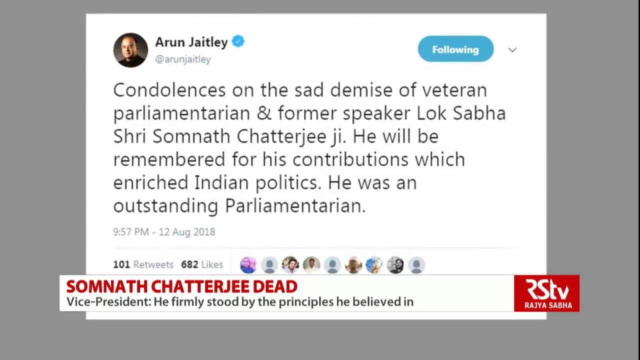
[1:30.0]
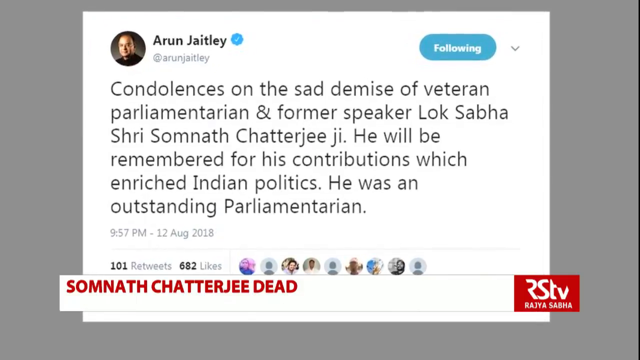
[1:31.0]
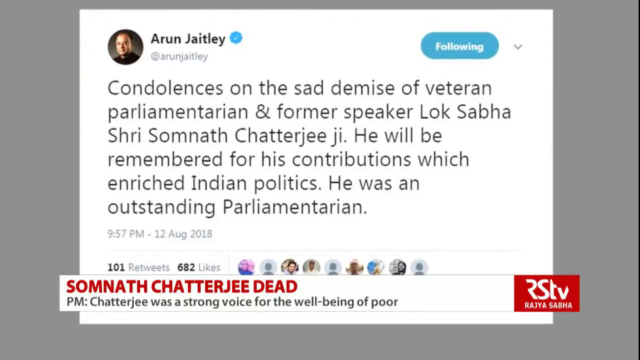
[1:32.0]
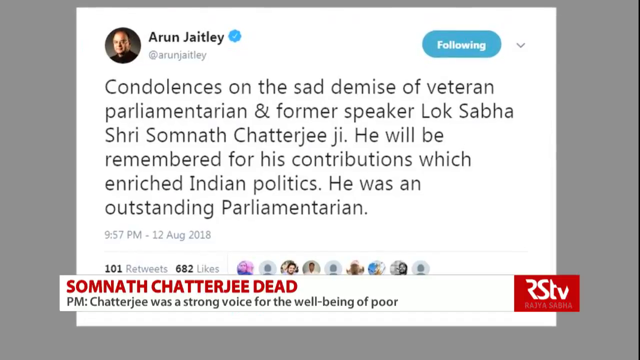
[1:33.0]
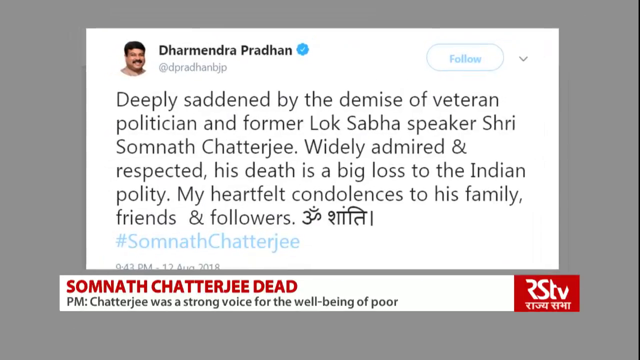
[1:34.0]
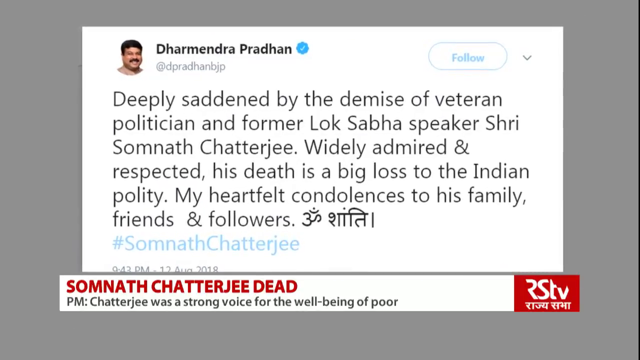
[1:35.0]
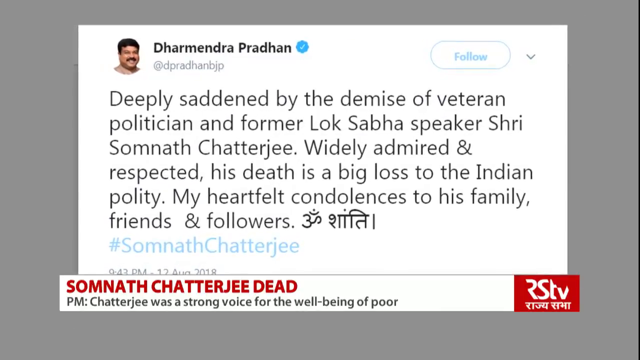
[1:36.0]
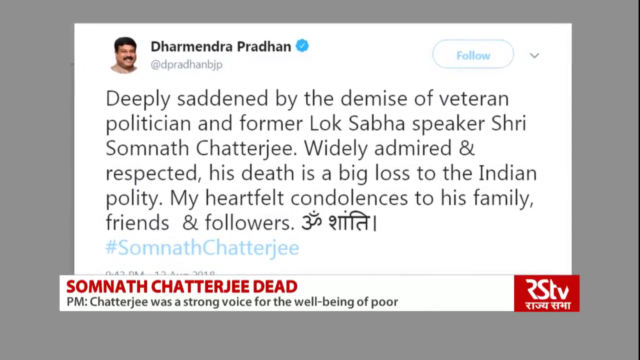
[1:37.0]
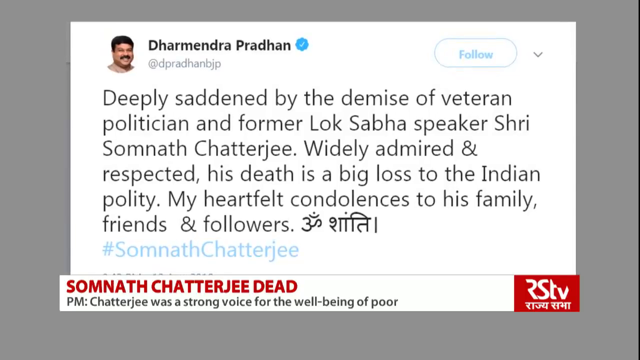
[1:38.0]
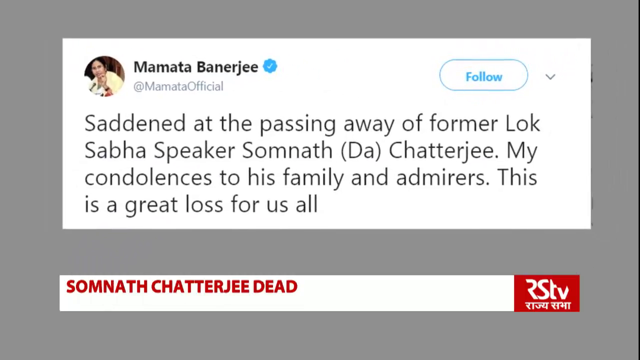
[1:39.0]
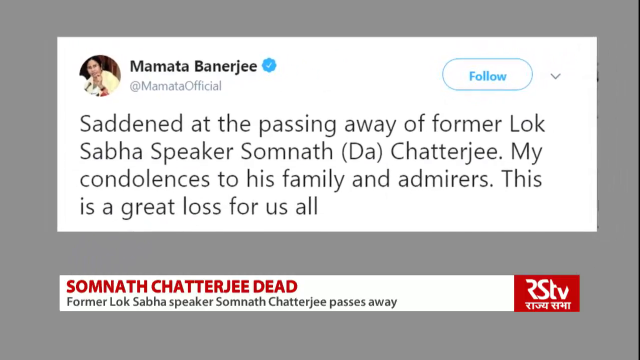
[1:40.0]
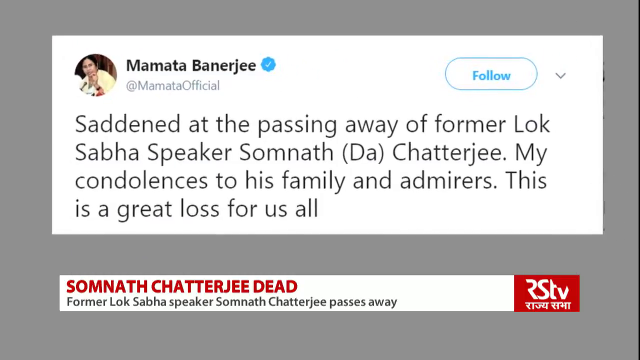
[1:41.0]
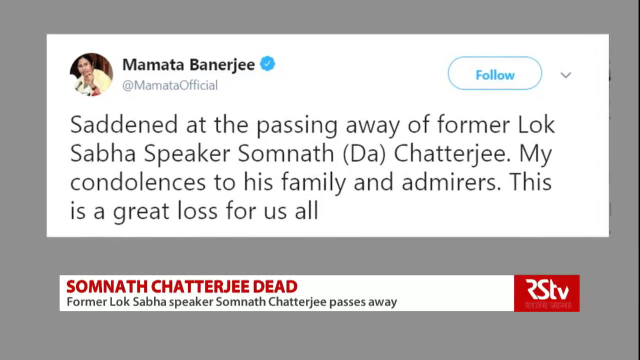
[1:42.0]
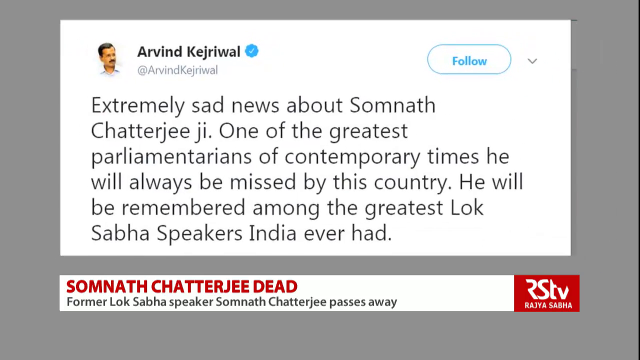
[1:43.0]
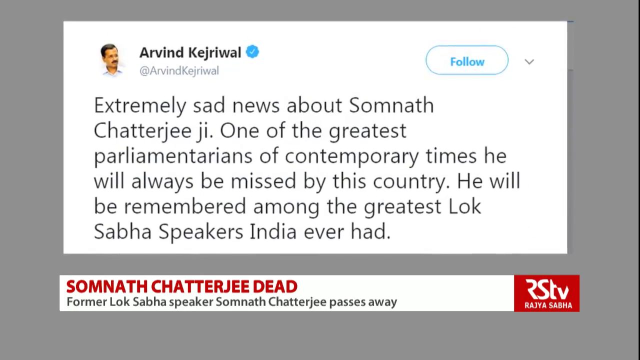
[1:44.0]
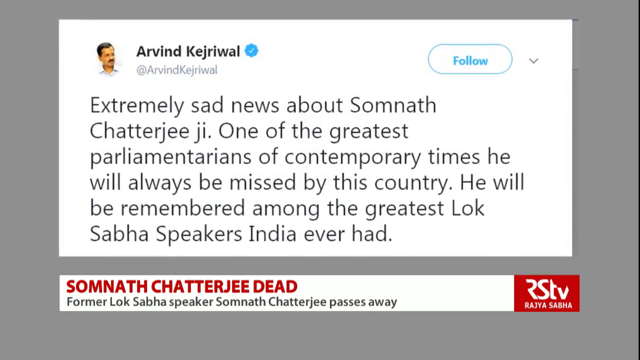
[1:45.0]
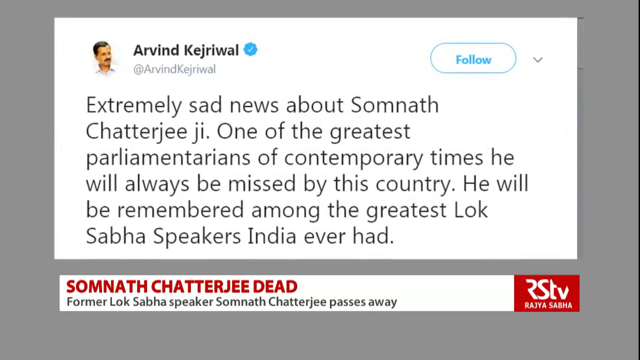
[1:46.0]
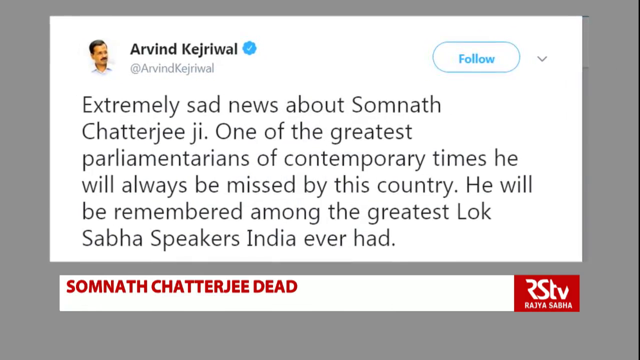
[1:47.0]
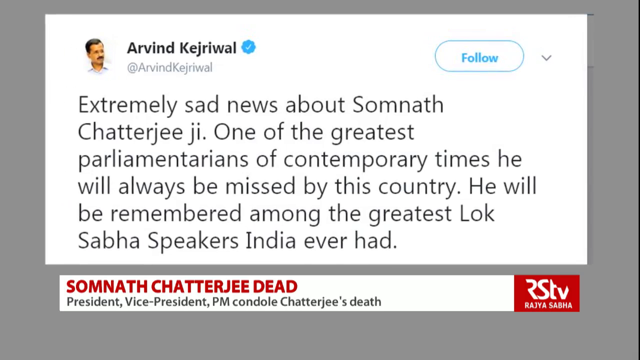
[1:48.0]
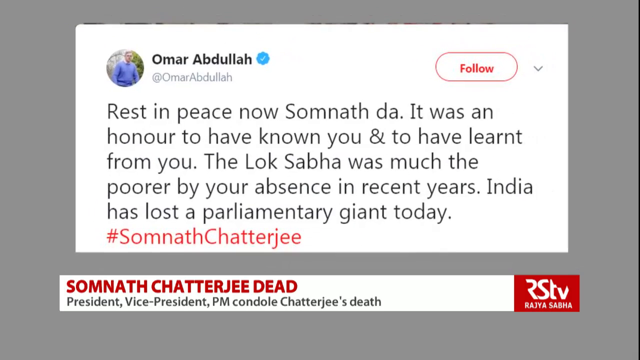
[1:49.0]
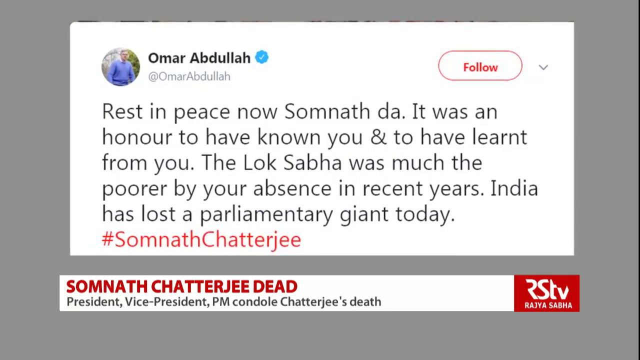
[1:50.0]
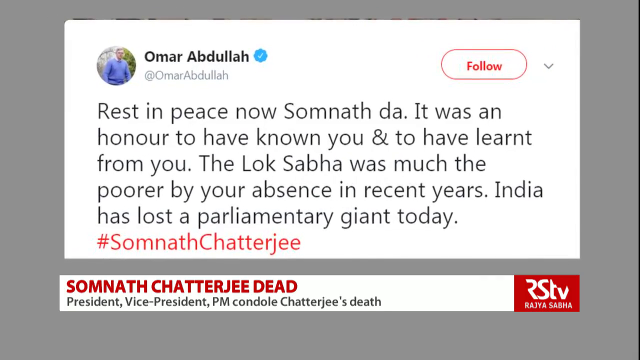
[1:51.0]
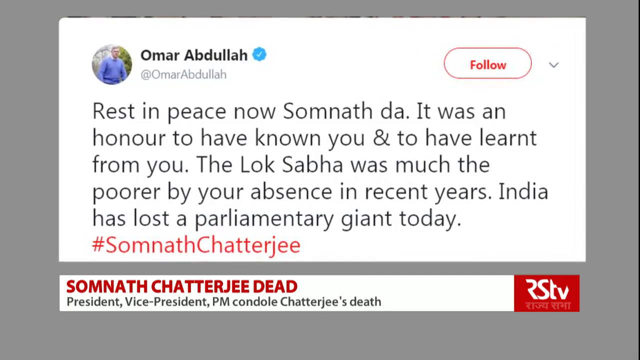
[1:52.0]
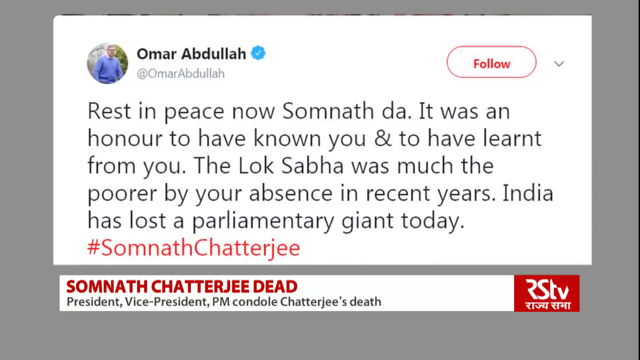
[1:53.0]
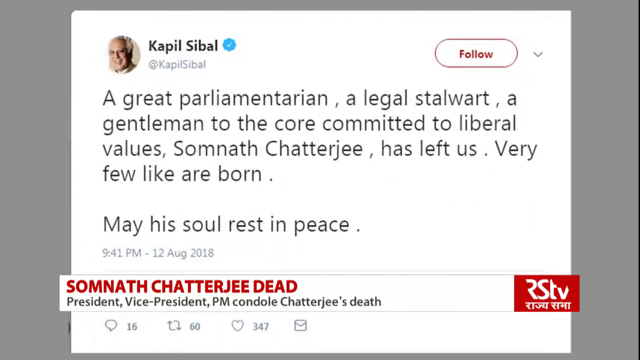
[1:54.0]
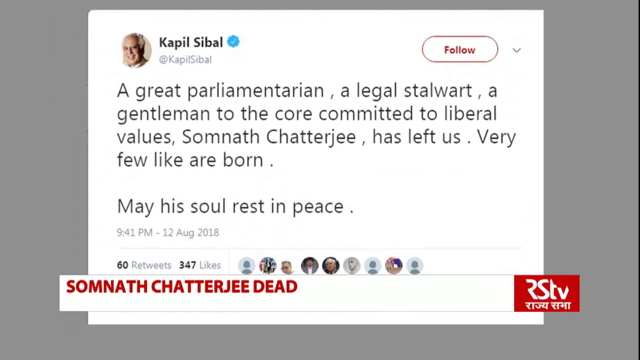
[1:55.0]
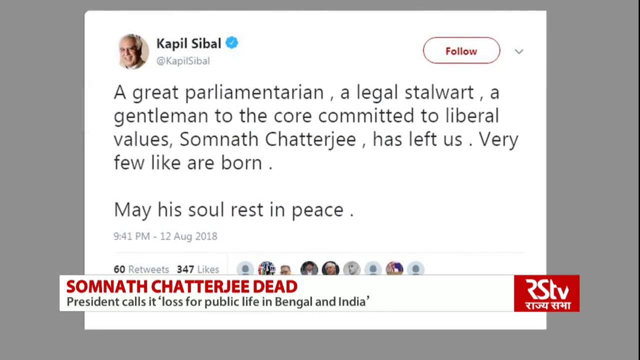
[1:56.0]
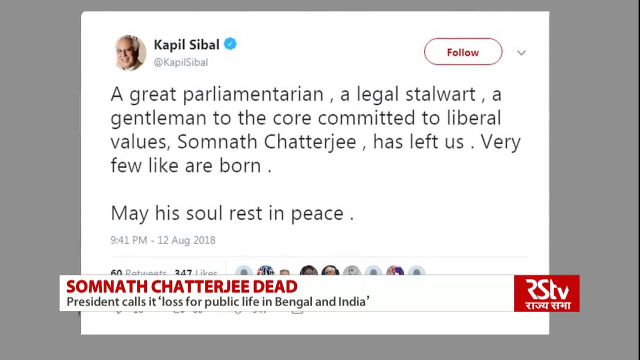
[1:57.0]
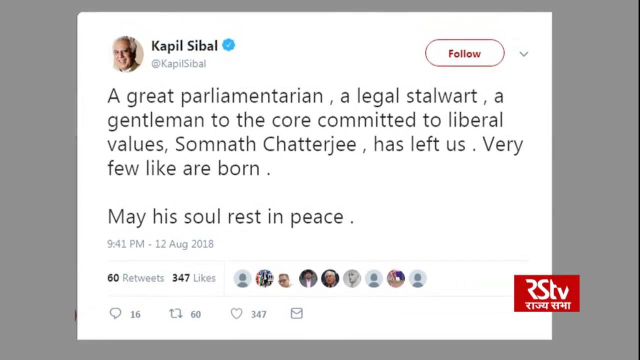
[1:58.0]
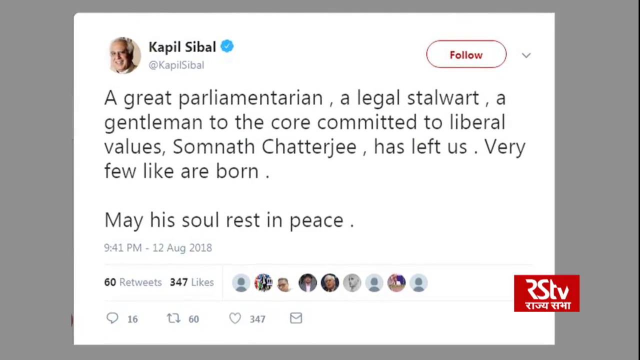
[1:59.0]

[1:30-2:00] A tweet by Arun Jaitley is in the center of the screen: "Condolences on the sad demise of veteran parliamentarian and former speaker Lok Sabha Shri Samnath Chatterjee. He will be remembered for his contributions which enriched Indian politics. He was an outstanding parliamentarian." It shows 101 retweets and 682 likes. The video cuts to a tweet by Dharmendra Paradhan: "deeply saddened by the demise of veteran politician and former Lok Sabha speaker Shri Samnath Chatterjee. Widely admired and respected his death is a big loss to the Indian politics. My heartfelt condolences to his family, friends, and followers." It then cuts to a tweet by Mamata Banerjee: "saddened at the passing away a former Lok Sabha speaker Samnath Das Chatterjee. My condolences to his family and admirers. This is a great loss for us all."